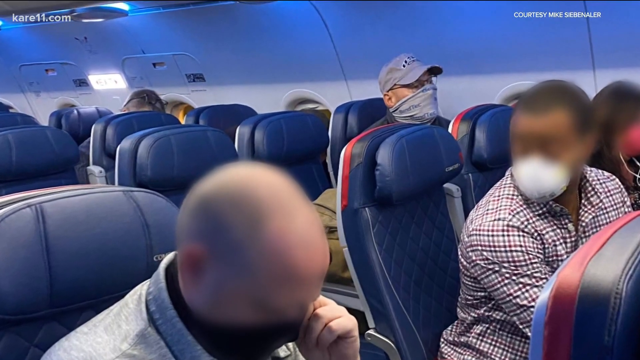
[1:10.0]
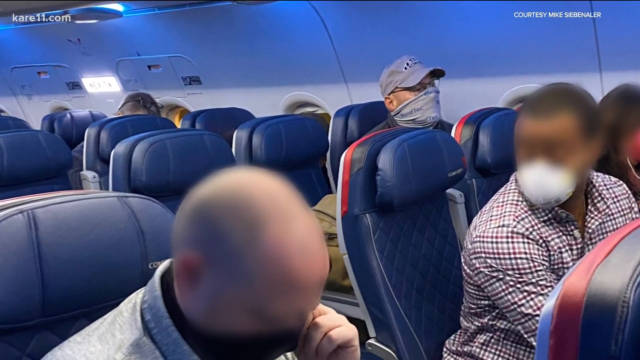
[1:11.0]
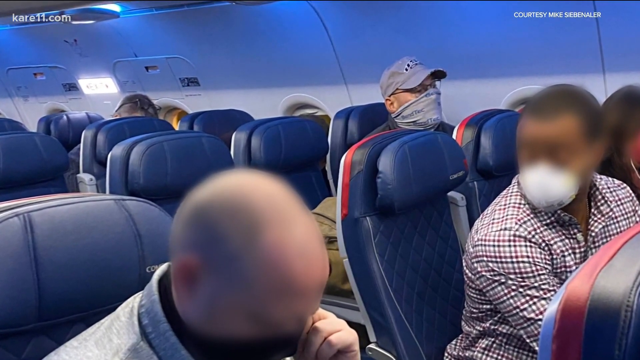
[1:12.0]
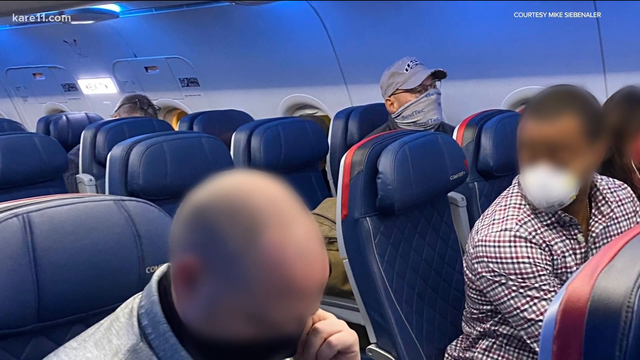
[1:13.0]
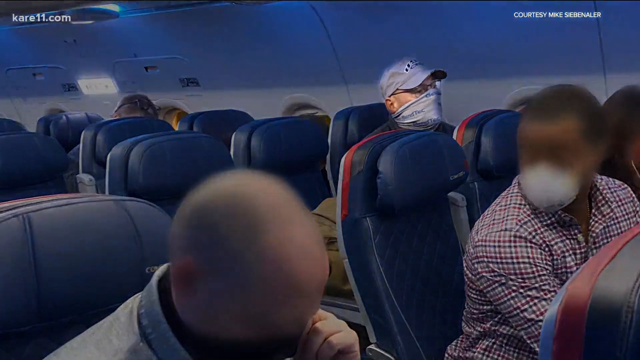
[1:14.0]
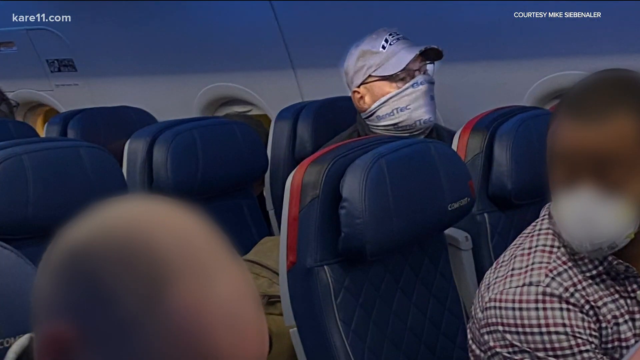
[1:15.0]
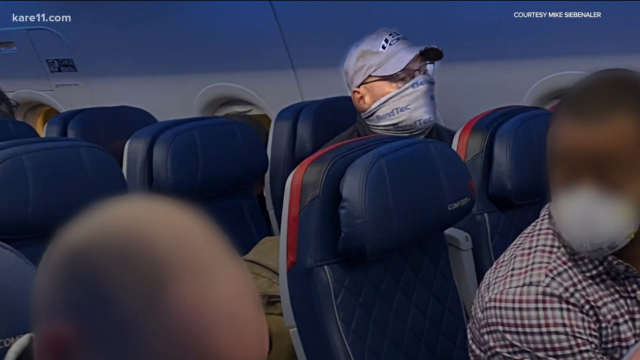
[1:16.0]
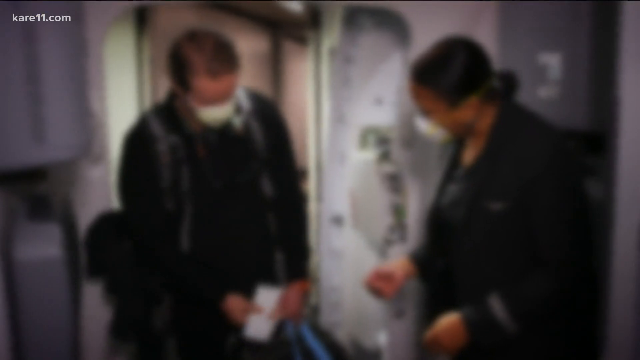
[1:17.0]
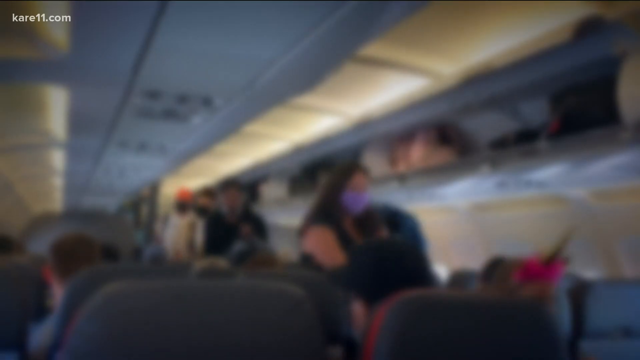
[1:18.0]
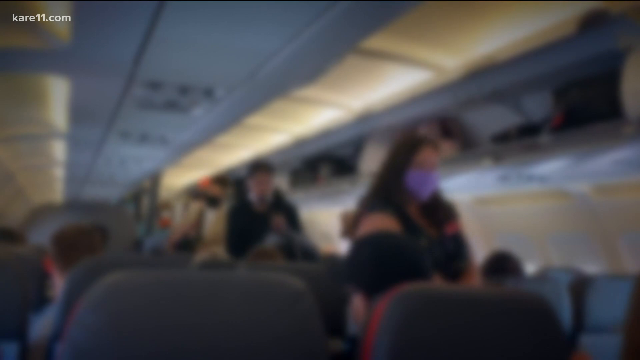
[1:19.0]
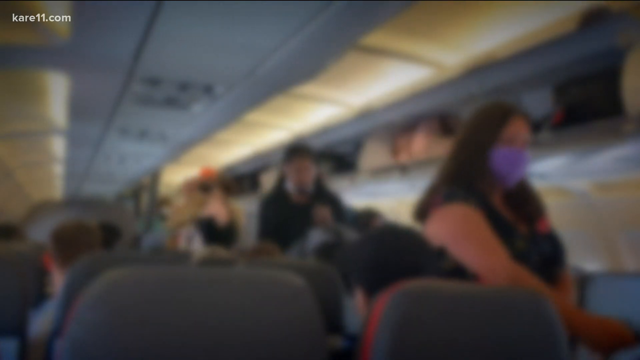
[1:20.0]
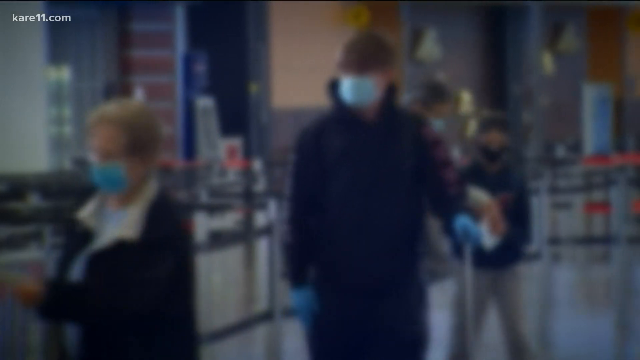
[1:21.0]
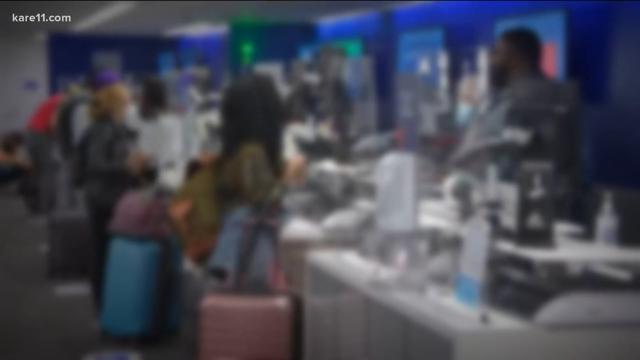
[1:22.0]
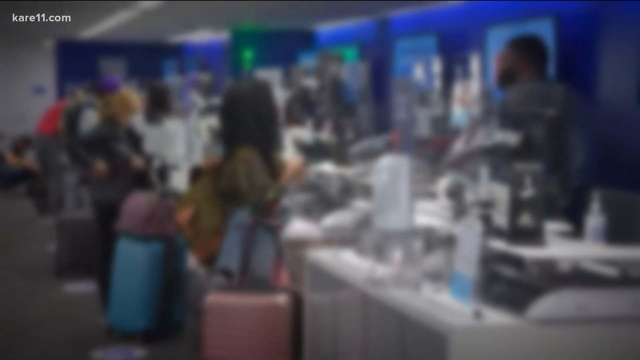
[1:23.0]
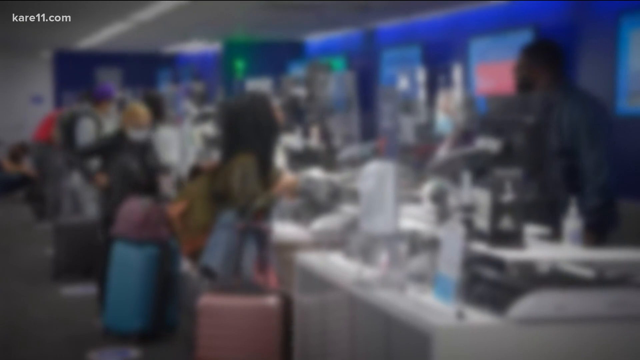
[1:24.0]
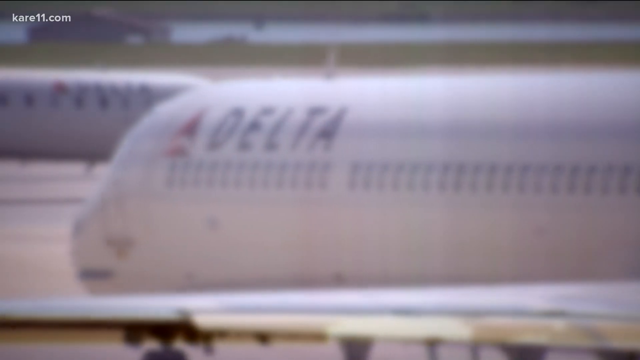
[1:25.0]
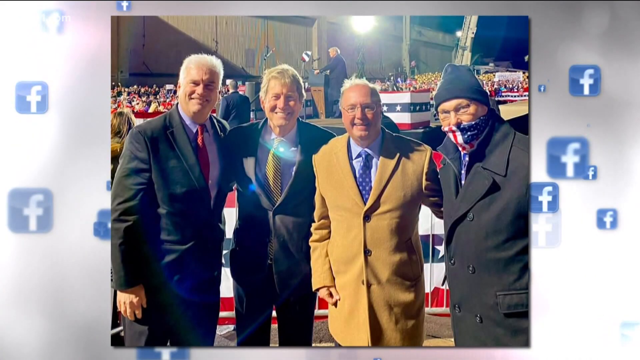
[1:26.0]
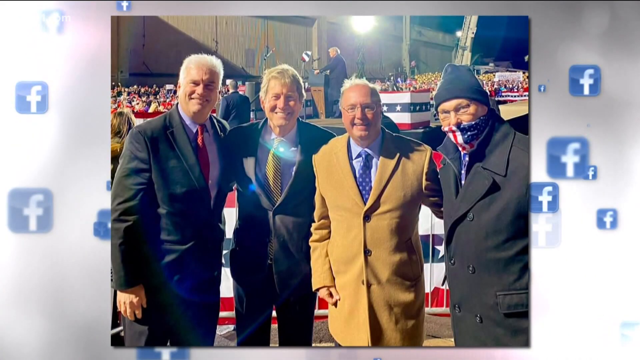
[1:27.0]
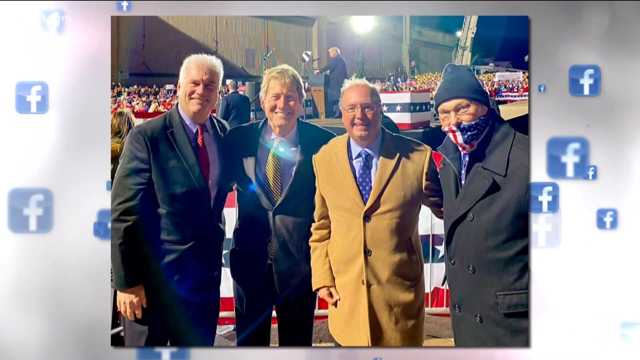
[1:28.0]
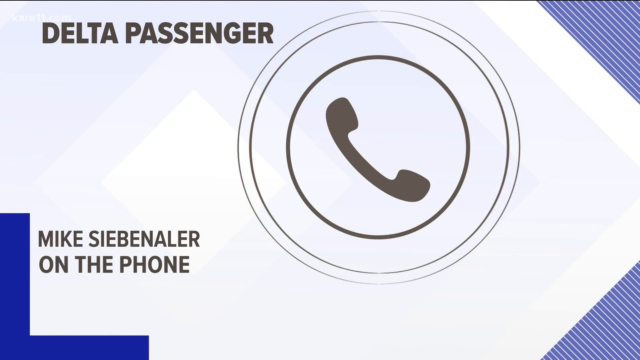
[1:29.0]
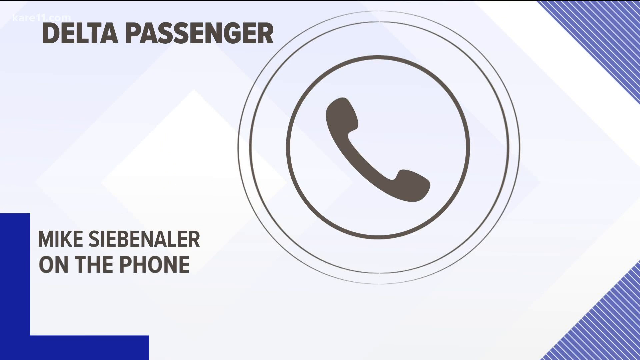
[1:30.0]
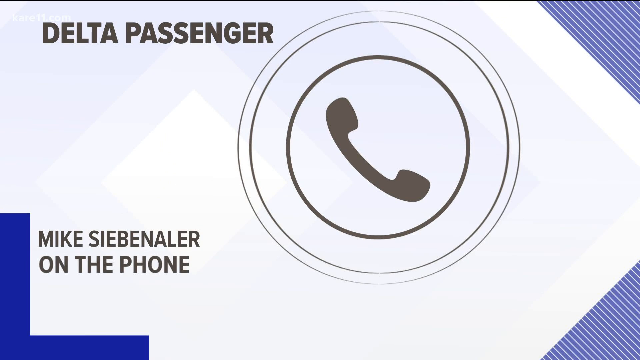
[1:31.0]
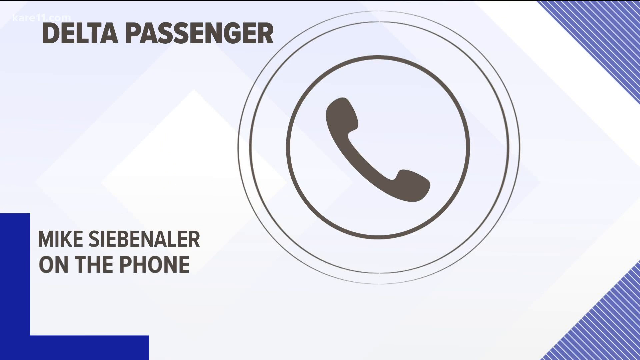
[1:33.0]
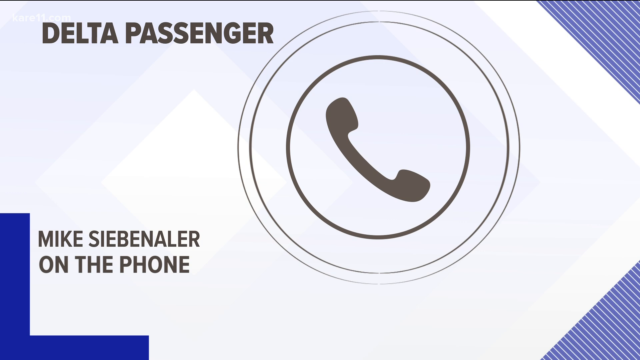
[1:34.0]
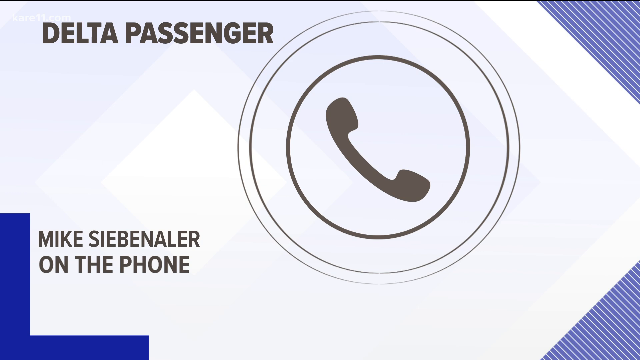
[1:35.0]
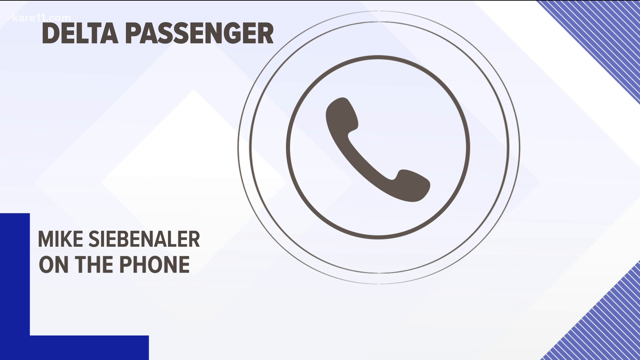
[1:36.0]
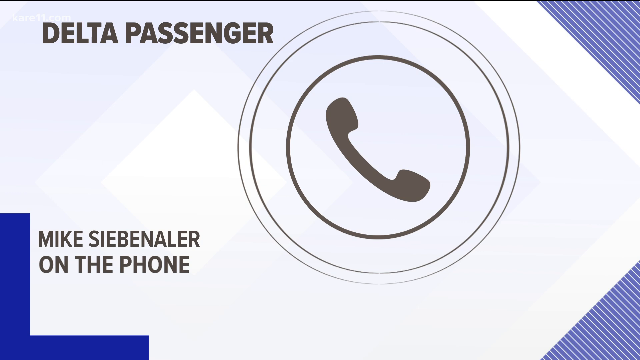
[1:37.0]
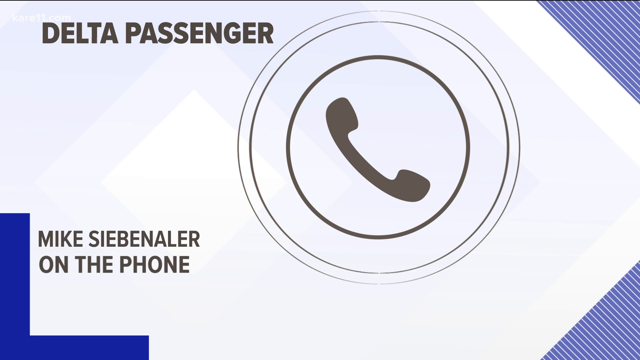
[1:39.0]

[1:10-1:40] The view of the airplane interior continues and focuses on one particular masked person. Blurred live footage follows, showing an airport rooftop and an airplane, then a transition to a Delta airplane, and then to a photograph showing the members. Next is a caption with a prominent phone icon in the middle, "Delta passenger" in the top left corner and "Mike Sebenaler on the phone" in the bottom left corner, giving the impression that a phone call is taking place. On top of the airplane footage, "KARE11.com" is in the top left corner and "courtesy Mike Sebenaler" is written in all uppercase in the top right corner. The chairs have a distinctive pattern and very clean headrests, and there is a kind of artificial white lighting that complements the blue.